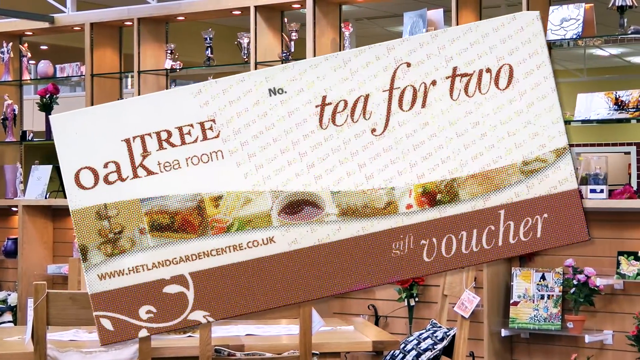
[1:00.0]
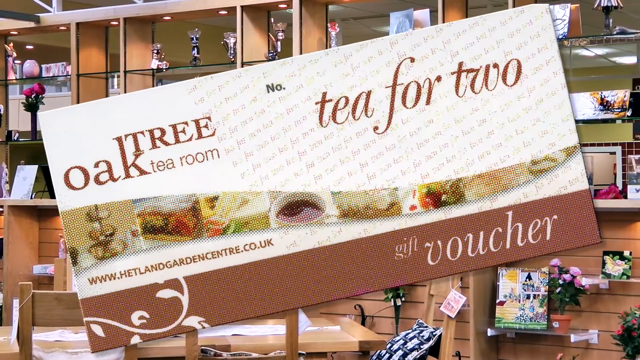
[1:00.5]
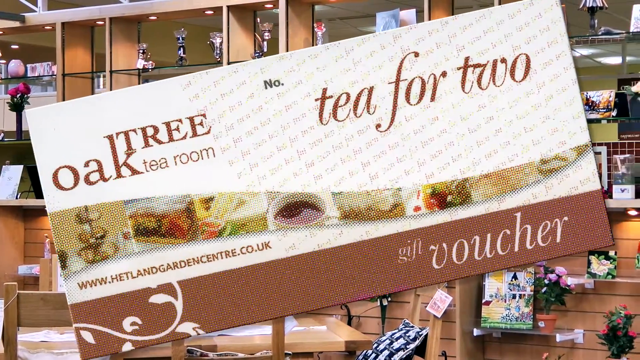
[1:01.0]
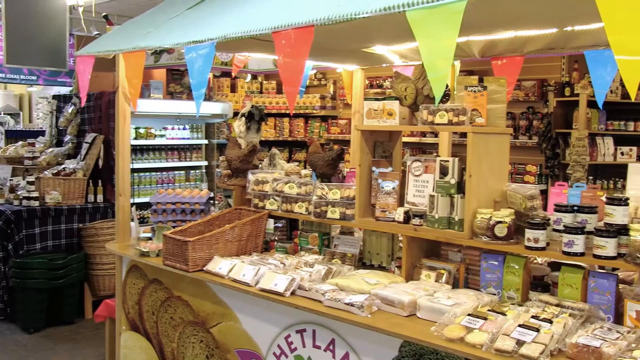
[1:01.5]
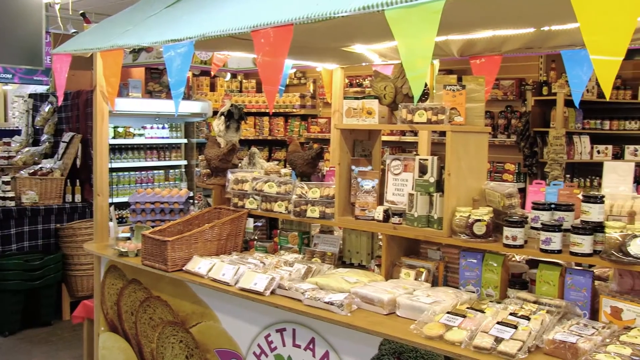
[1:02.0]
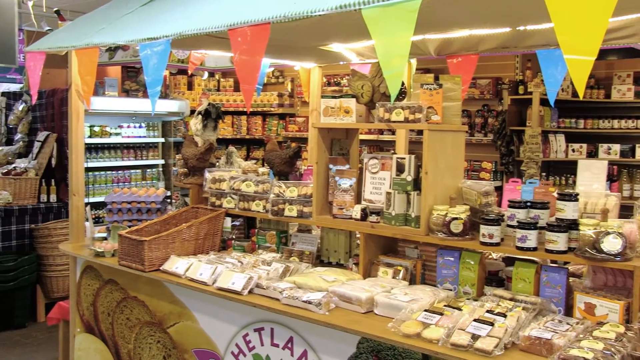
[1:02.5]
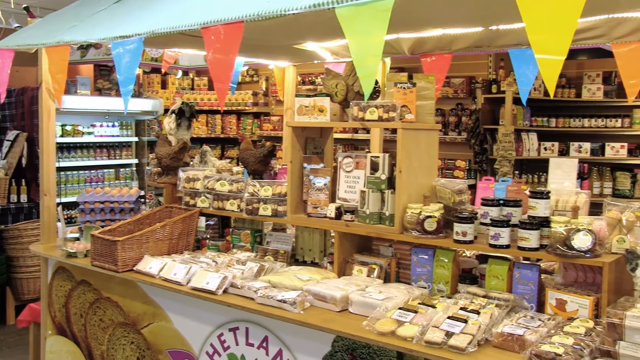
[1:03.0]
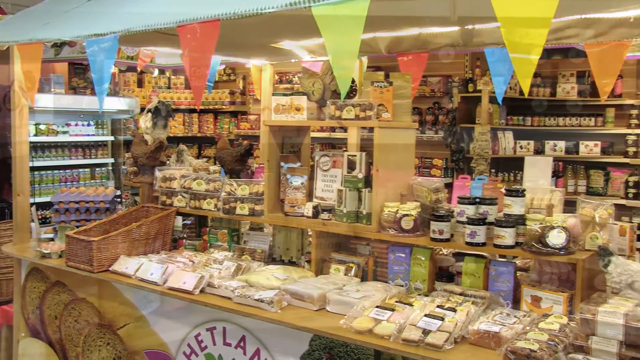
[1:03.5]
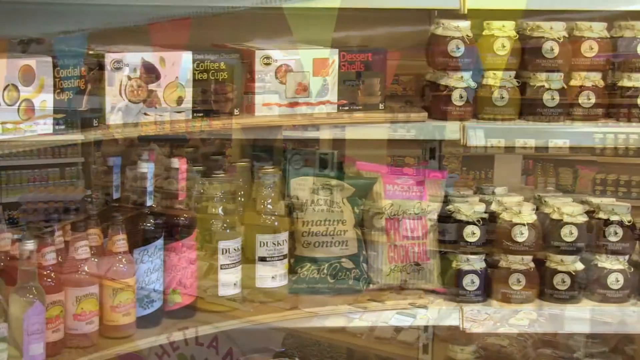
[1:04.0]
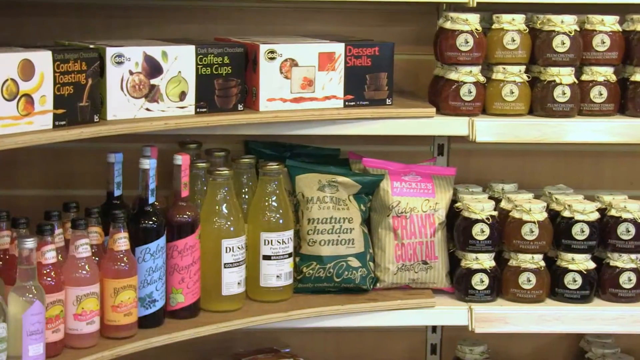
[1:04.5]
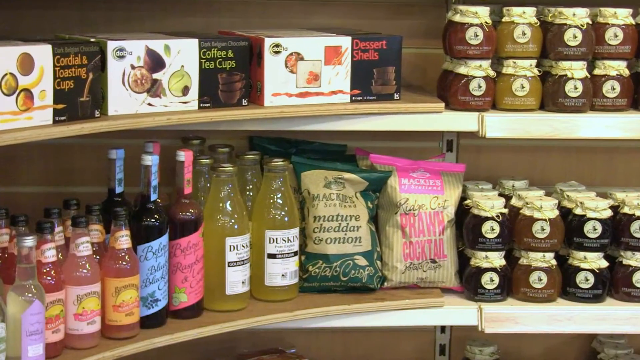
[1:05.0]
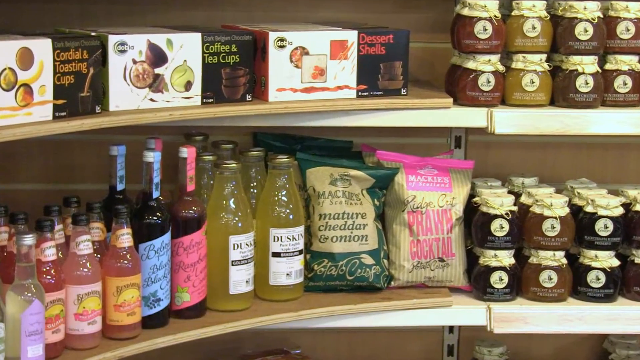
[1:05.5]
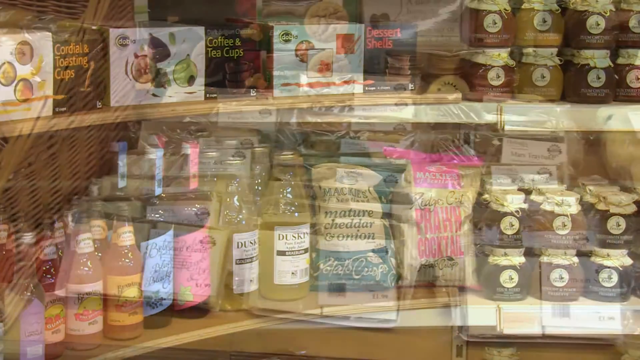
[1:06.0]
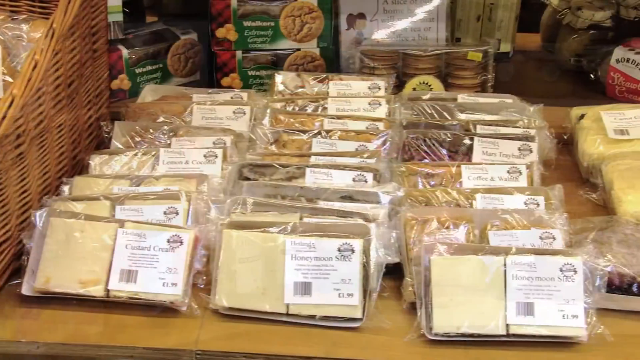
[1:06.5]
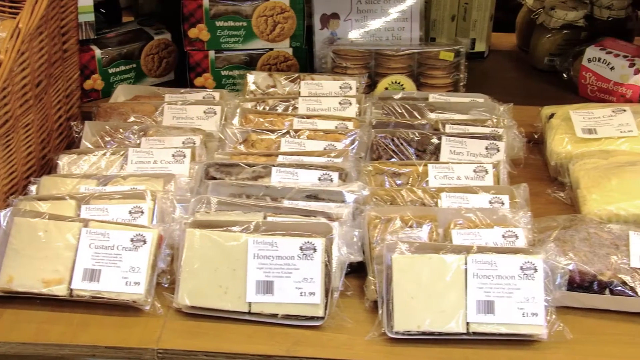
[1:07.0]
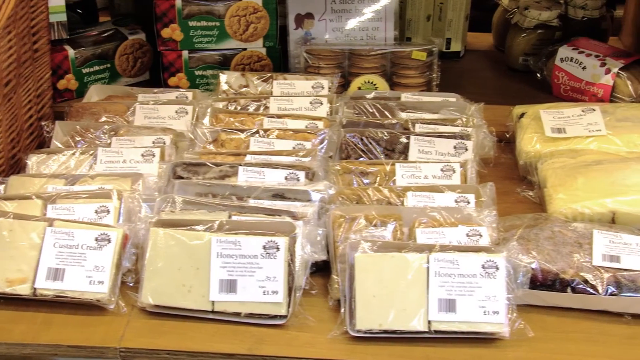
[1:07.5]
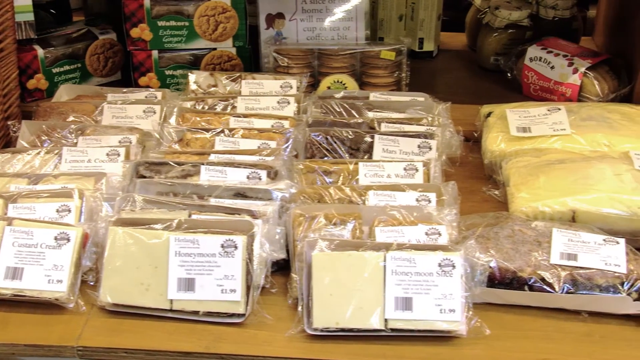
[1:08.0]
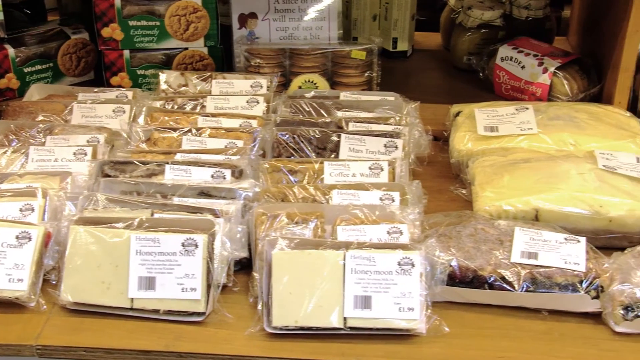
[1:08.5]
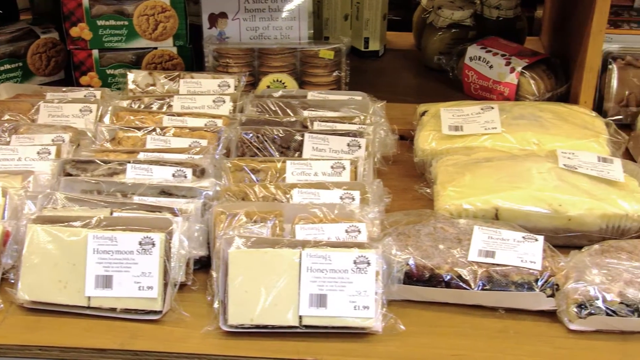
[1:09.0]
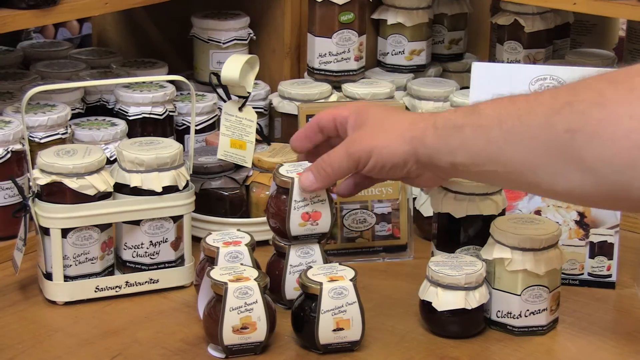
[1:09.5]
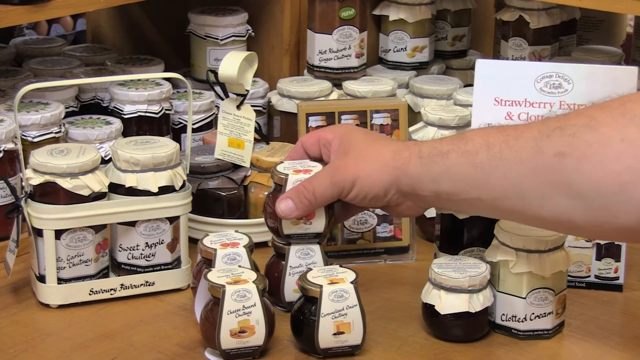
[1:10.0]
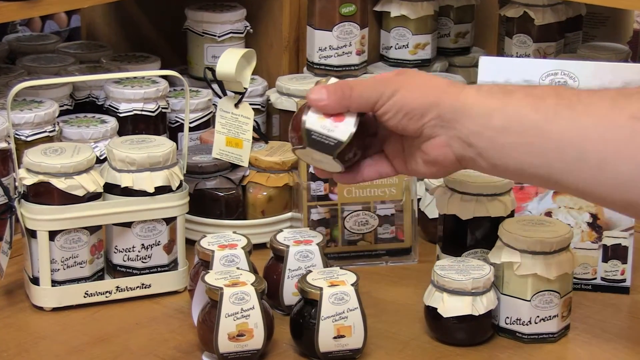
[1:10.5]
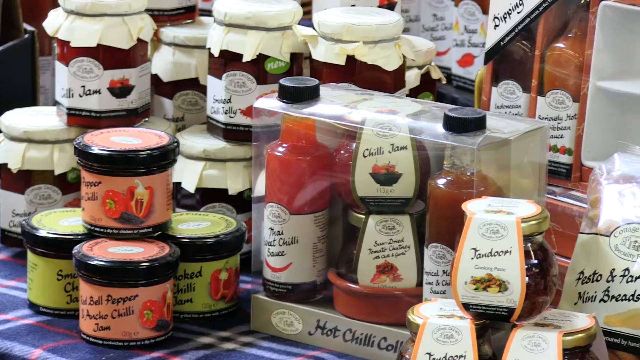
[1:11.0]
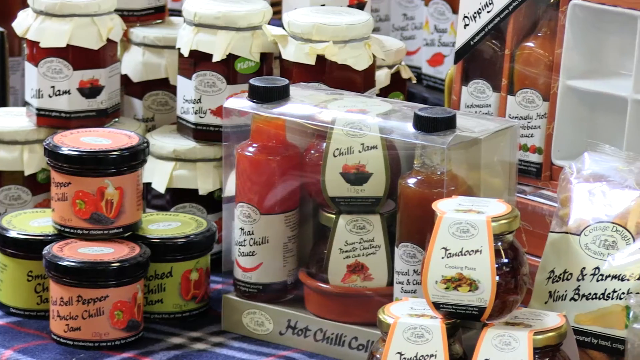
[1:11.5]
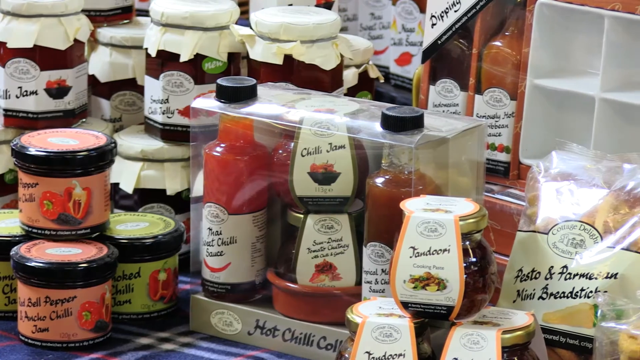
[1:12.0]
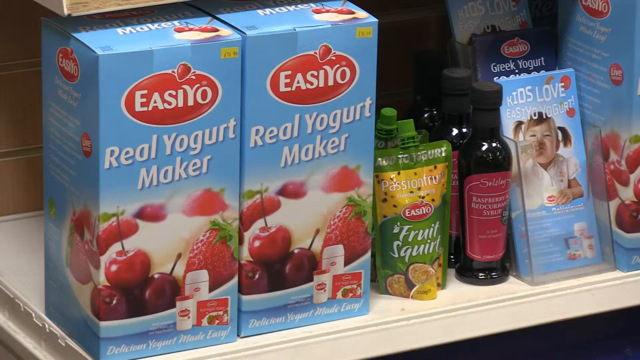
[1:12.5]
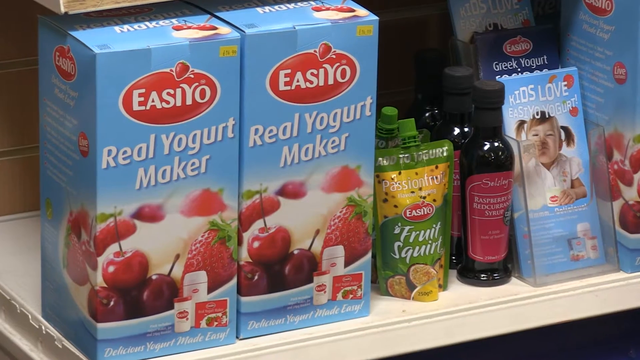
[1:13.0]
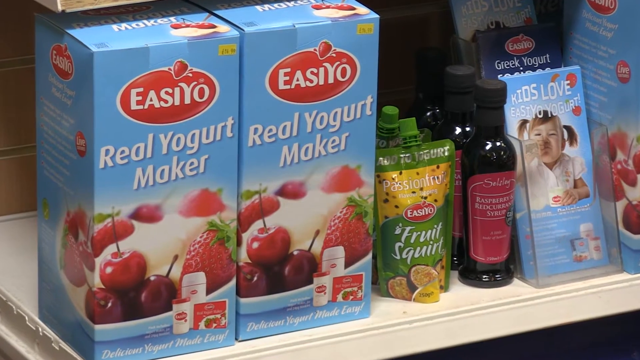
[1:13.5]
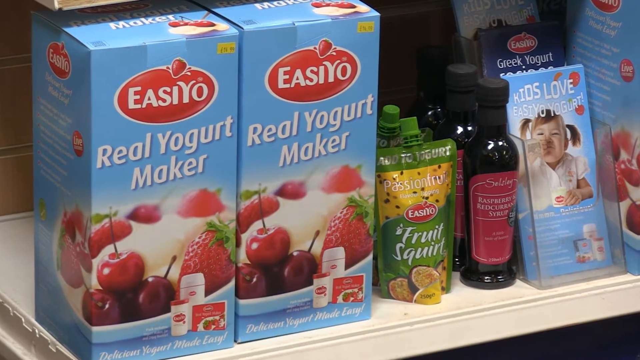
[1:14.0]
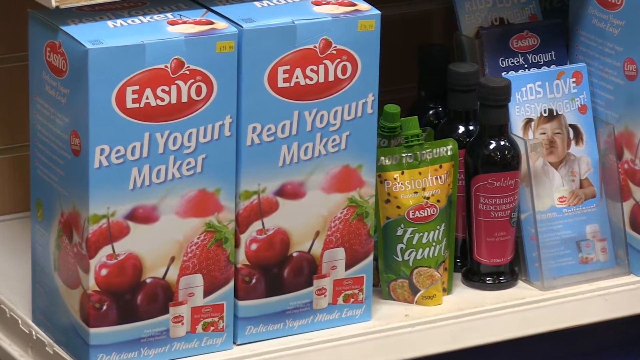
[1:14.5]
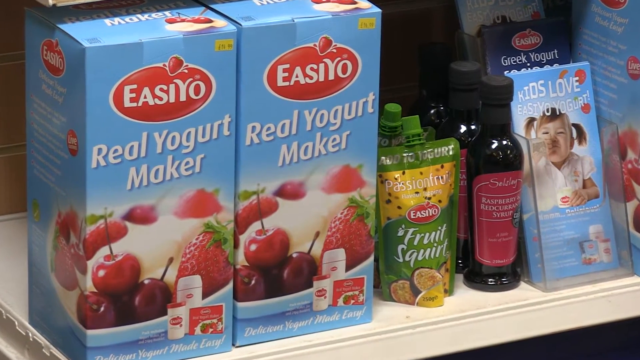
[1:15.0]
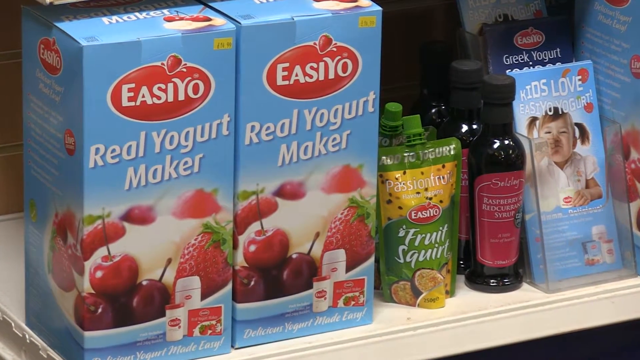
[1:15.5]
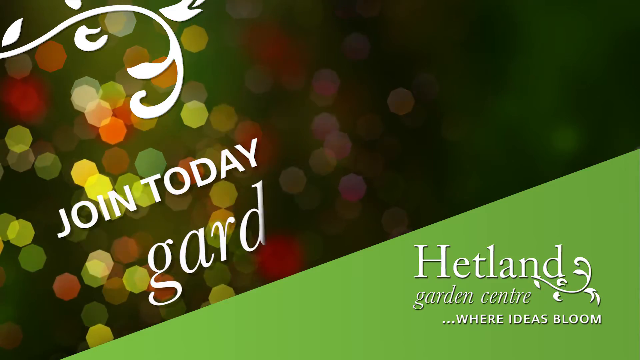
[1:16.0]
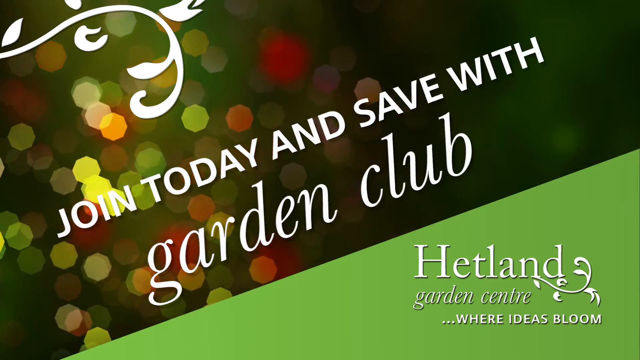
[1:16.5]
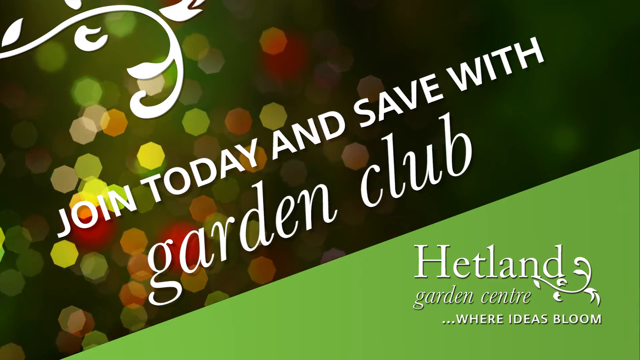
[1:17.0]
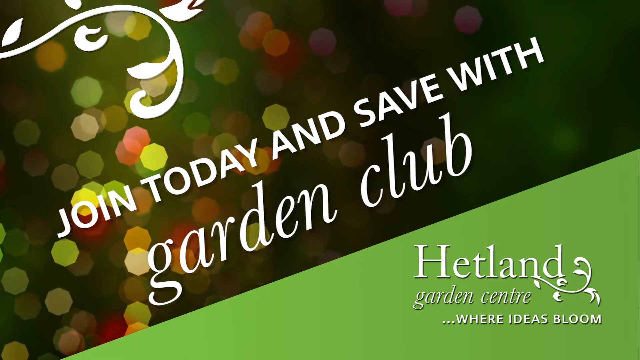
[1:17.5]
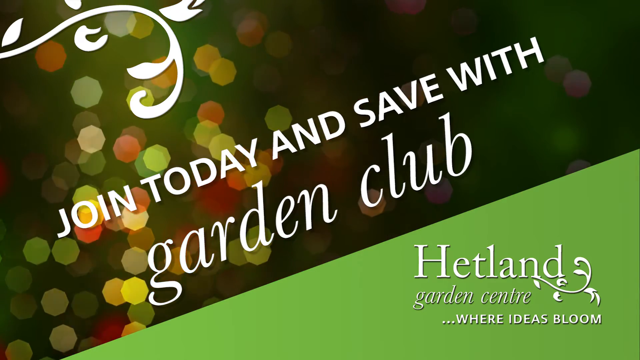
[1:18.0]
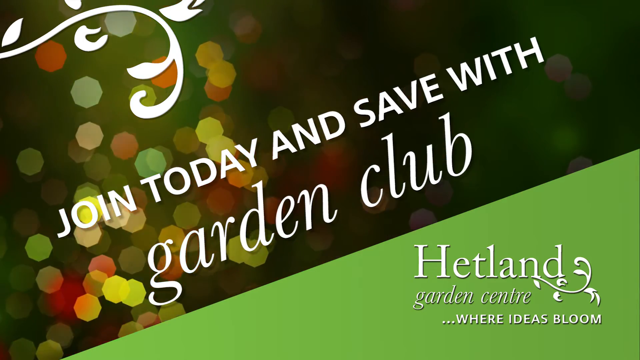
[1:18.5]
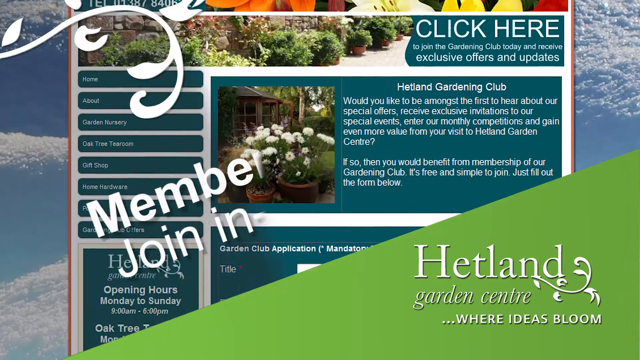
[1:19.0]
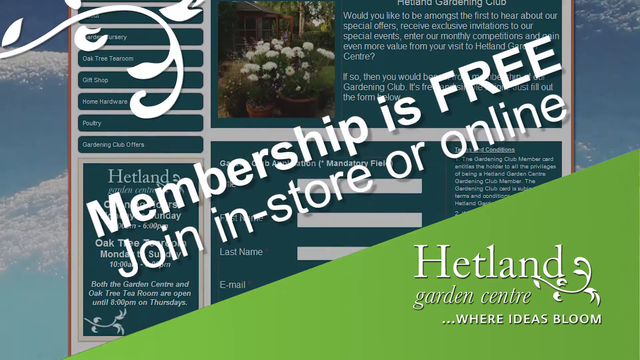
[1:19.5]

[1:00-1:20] On screen is "oak tree tea room tea for two gift voucher". A room at Hetlands (spelled H-E-T-L-A-N-D-S) is shown, with a kiosk that has little flags of different colors hung above it and a lot of brown. The camera pans through what looks like food: cheddar and onion items that look like potato chips, and bottles that could be wine or some other drink. There are what could be cakes, breads, pans or cookies. Someone picks up something that looks like jam or jelly. An E-A-S-I-Y-O real yogurt maker is shown, with strawberries on the boxes. A small green and yellow box on the right side says "fruit squirt", and there is a black bottle next to it. Text reads "join today and save with garden club", and computer graphics then show "membership free join in store online".